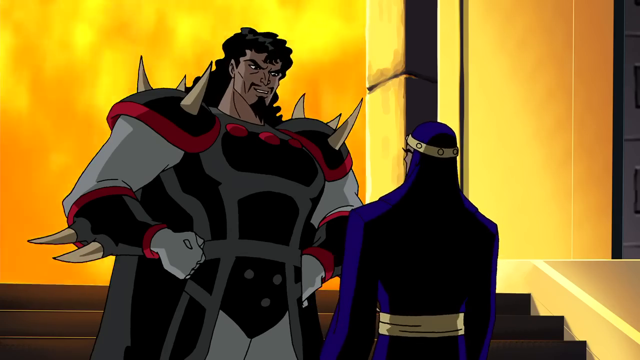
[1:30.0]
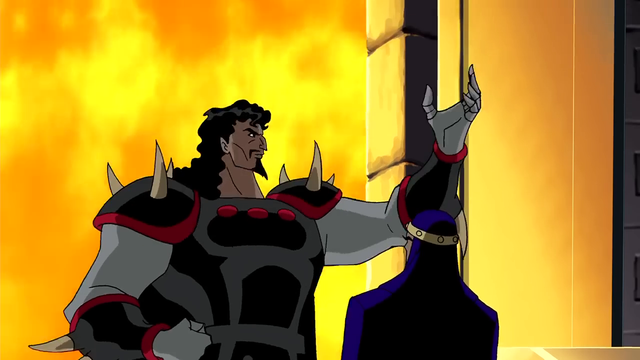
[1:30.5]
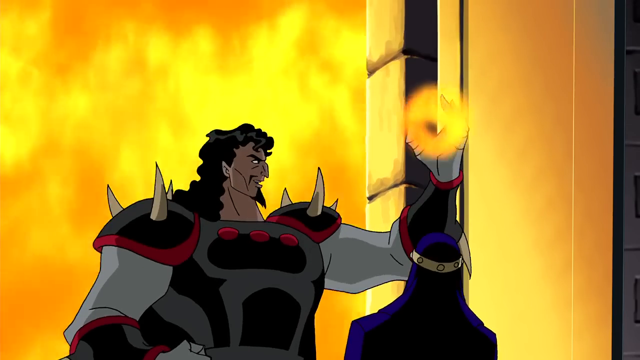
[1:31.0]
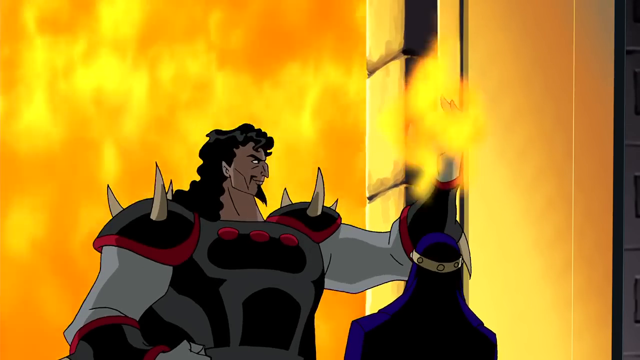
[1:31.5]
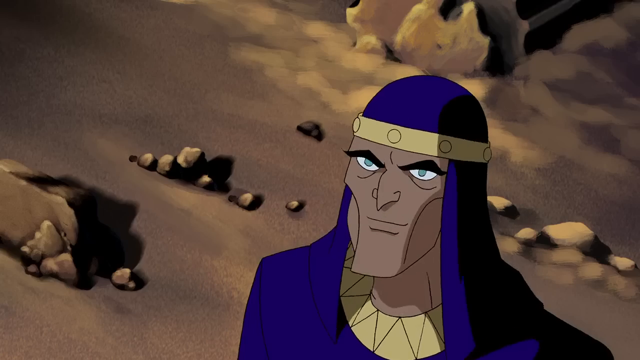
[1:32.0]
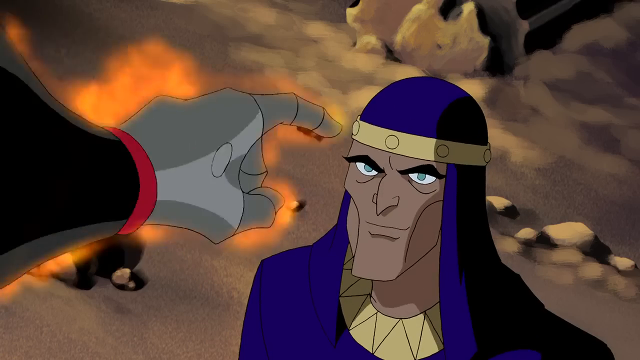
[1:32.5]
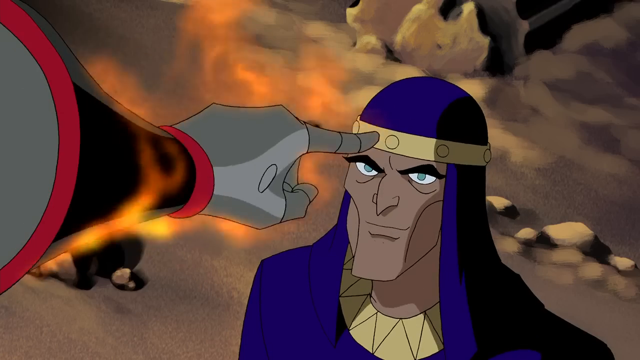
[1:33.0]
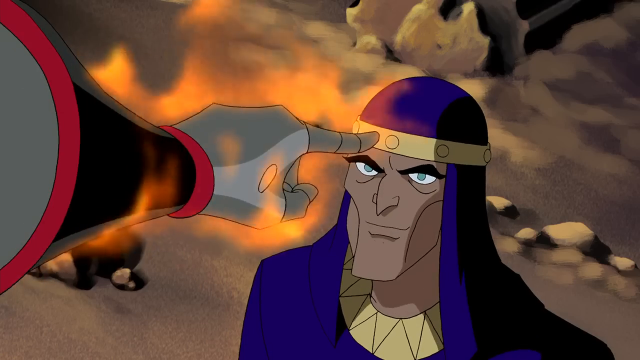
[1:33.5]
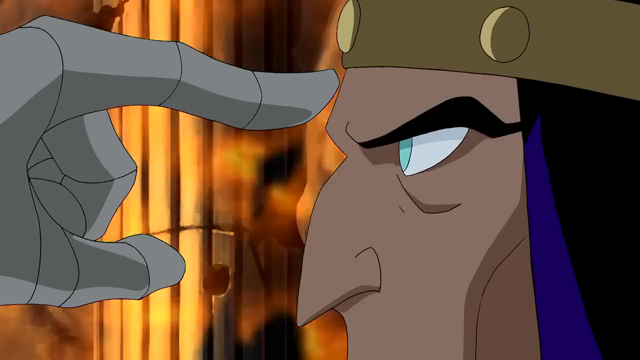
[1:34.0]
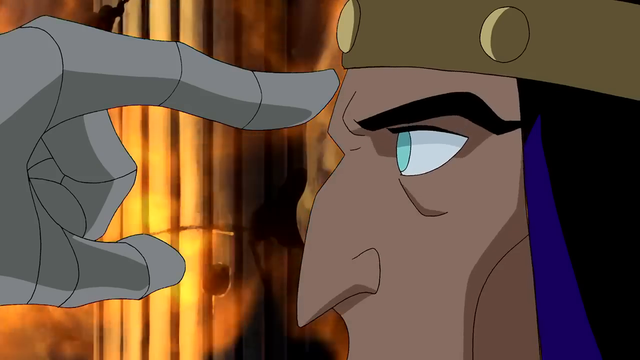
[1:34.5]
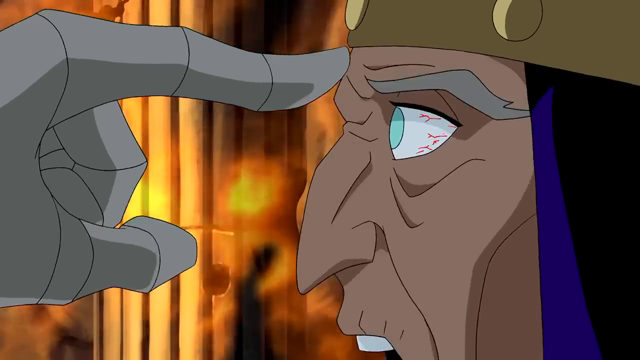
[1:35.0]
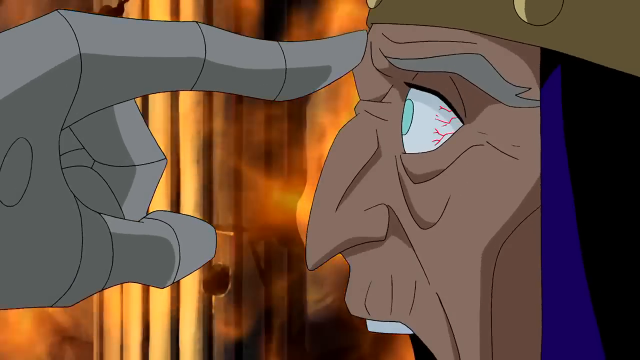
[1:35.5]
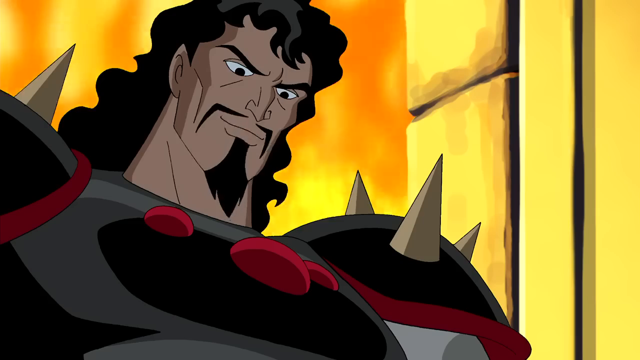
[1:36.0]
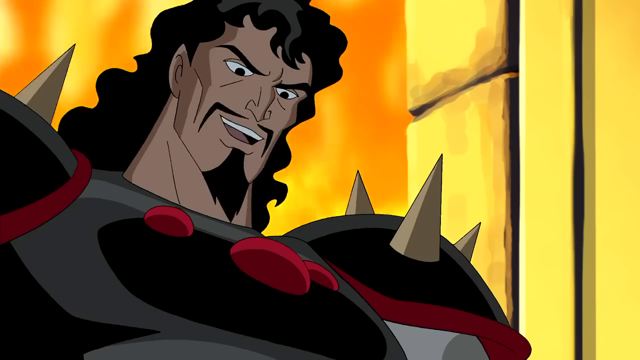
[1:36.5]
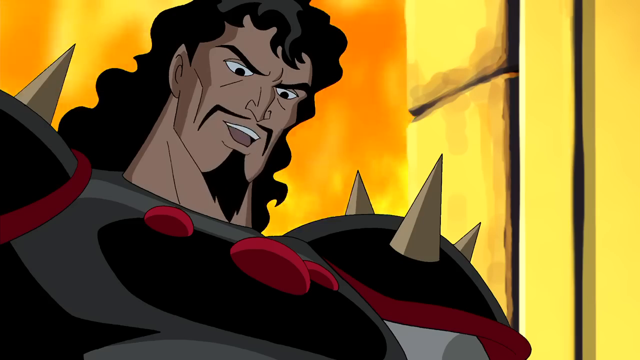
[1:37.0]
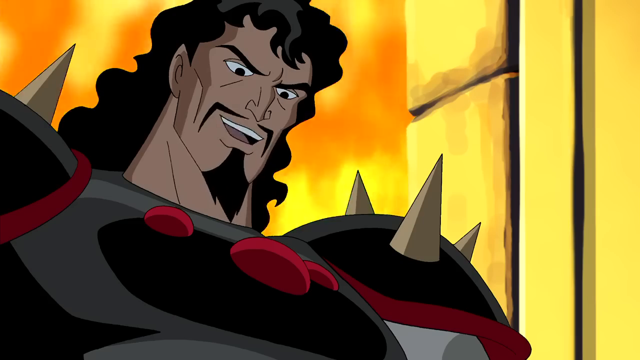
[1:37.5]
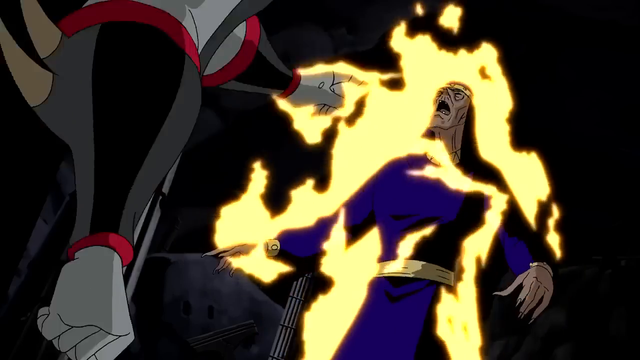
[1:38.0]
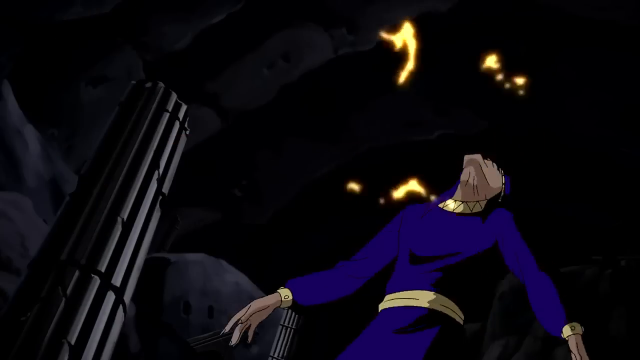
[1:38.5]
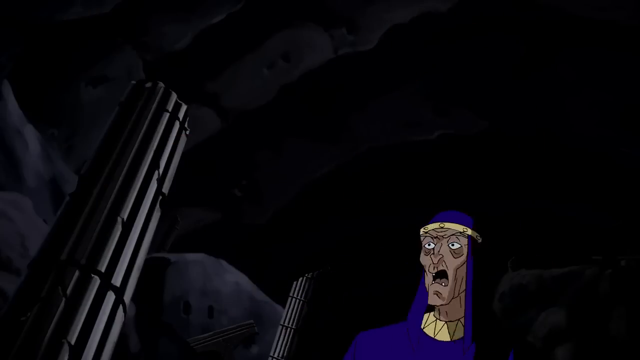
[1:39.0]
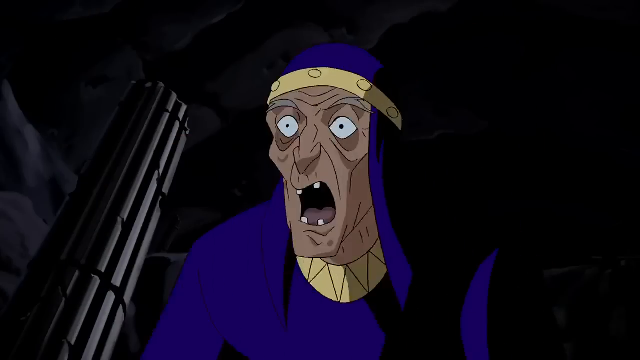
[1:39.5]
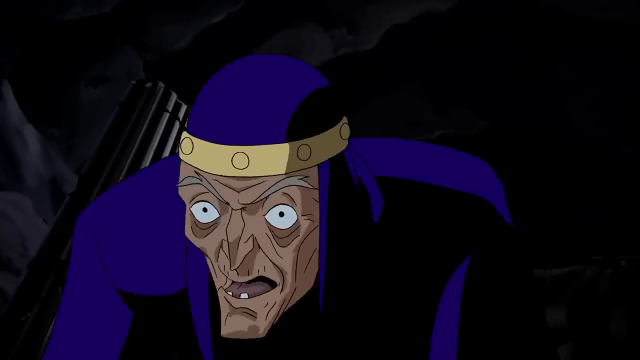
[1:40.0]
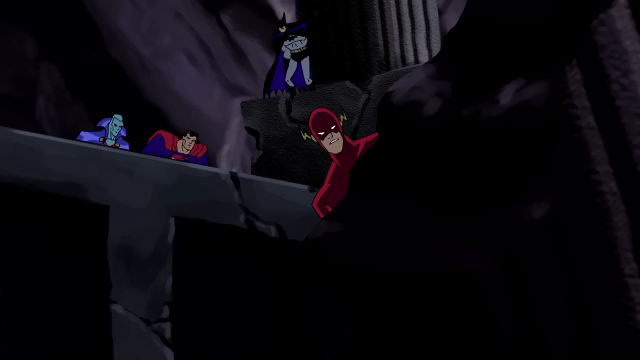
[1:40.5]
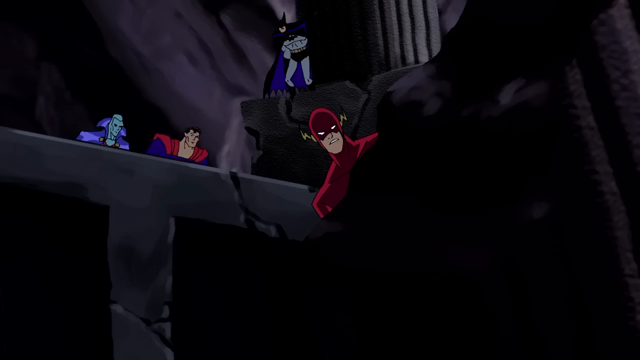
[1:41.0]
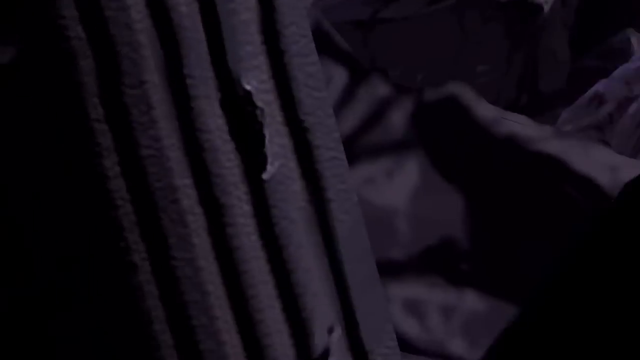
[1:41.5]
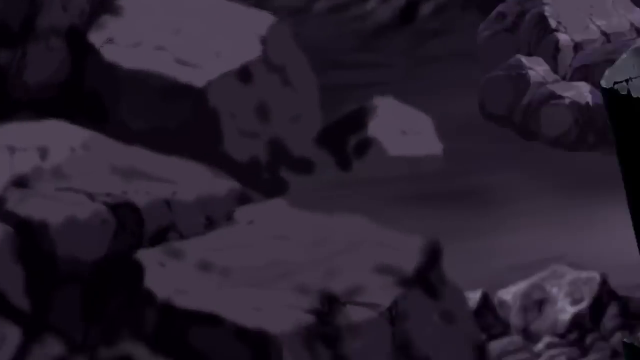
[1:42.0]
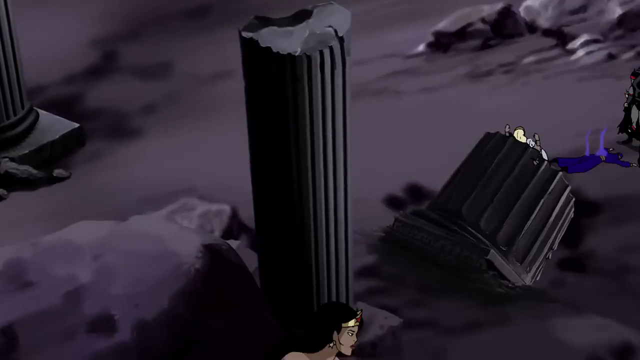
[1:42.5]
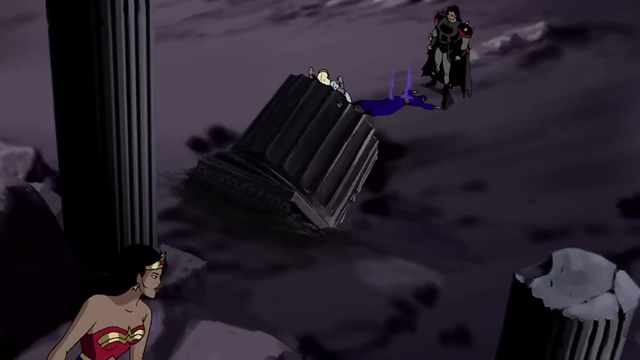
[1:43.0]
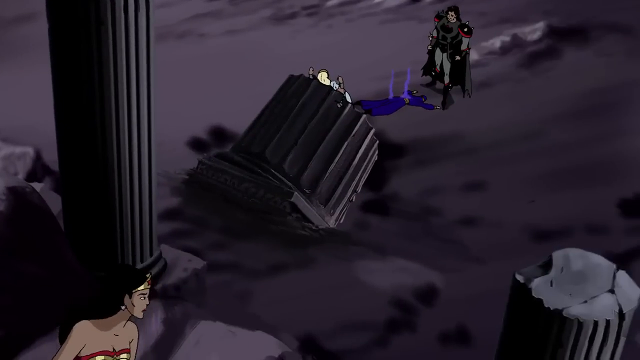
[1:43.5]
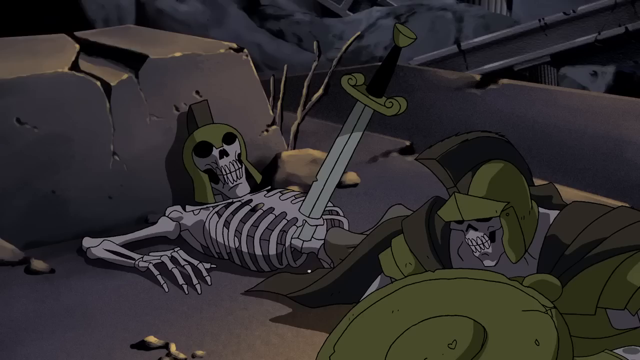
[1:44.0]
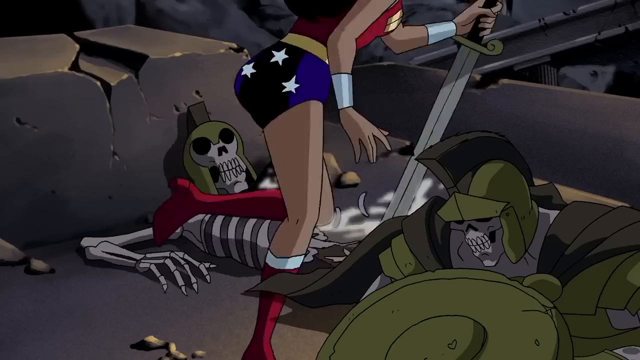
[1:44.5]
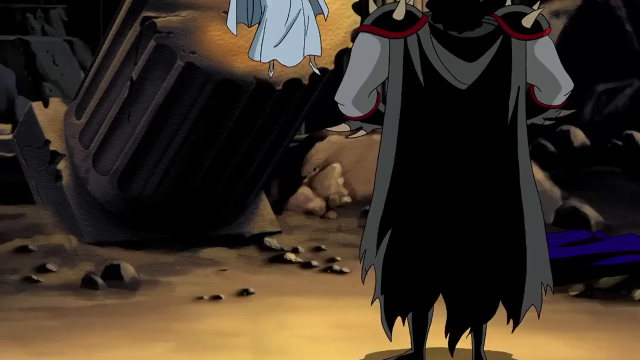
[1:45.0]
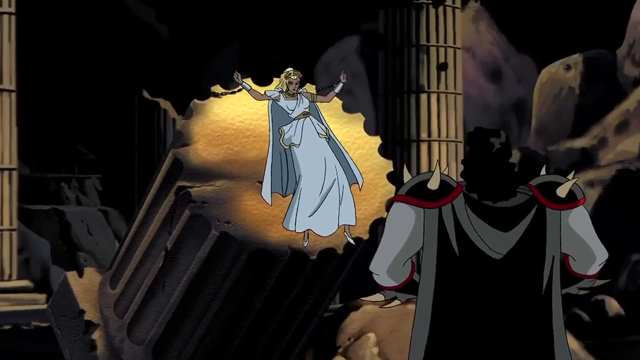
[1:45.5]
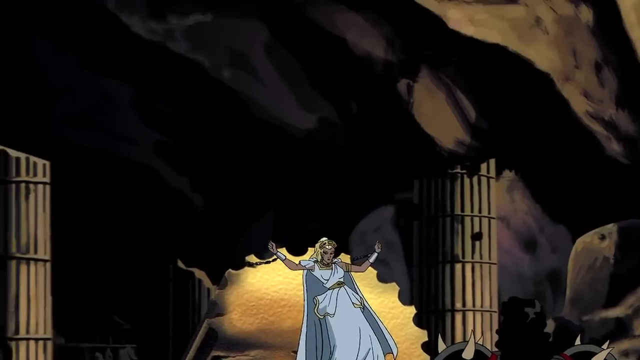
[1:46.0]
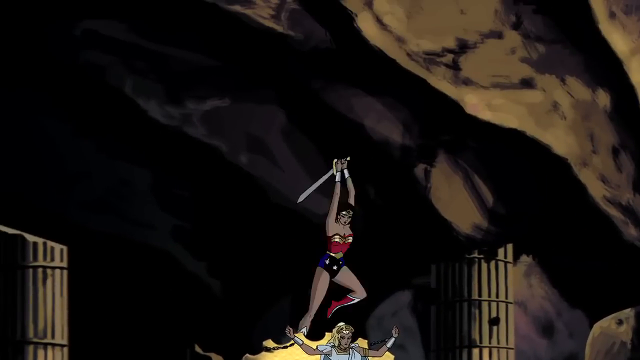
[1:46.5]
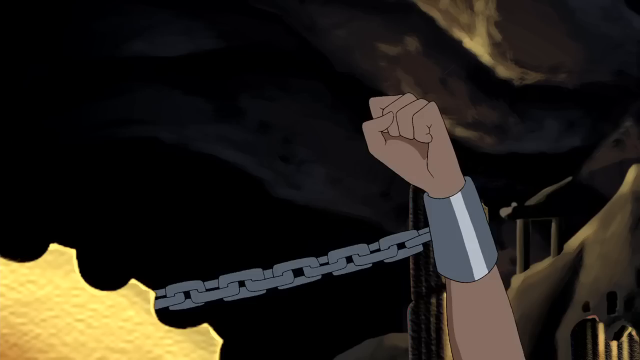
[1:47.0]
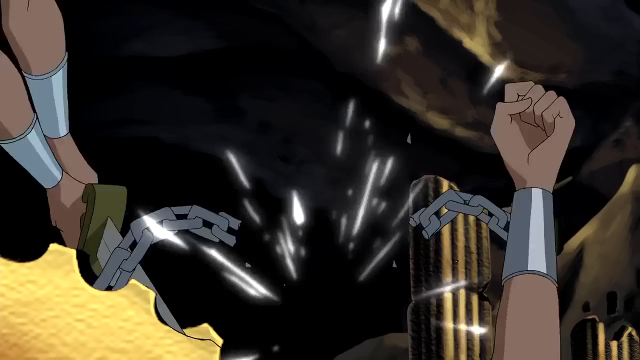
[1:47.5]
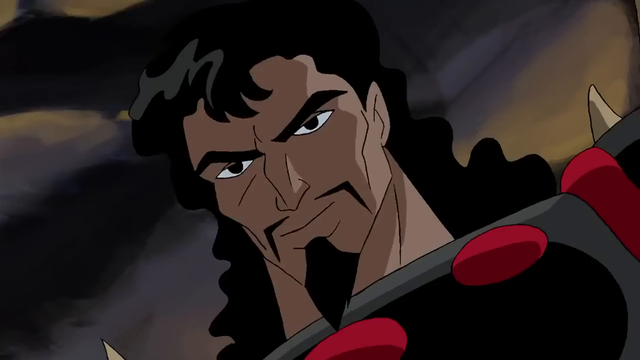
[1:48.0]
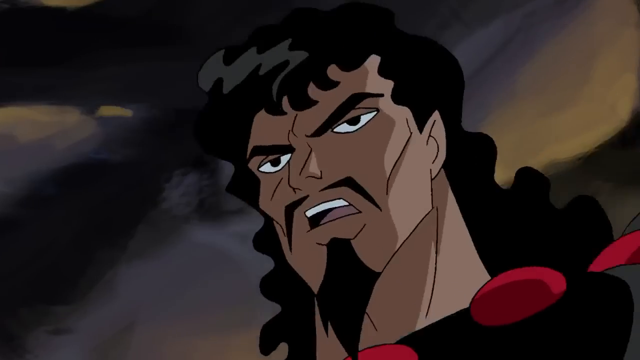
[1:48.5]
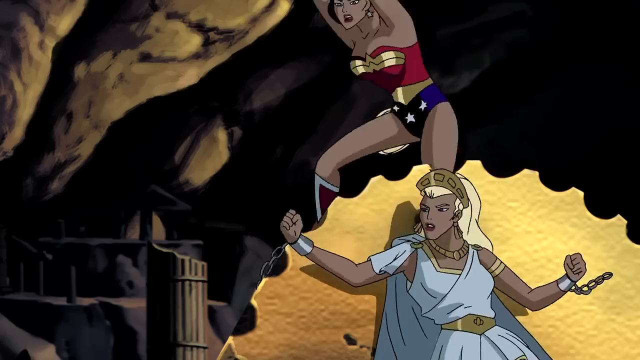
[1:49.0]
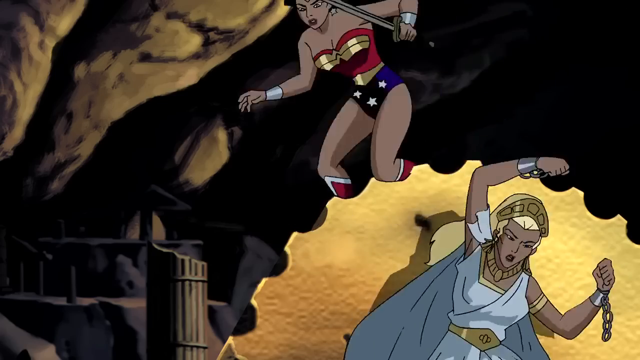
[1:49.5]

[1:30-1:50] Yellow fire blazes in the background, along with a yellow and black portion of the wall and a bit of gray wall. In the foreground is the large muscular character with wavy black hair, a long black beard and tan skin, wearing black, gray and red armor. Three horns stick out of each shoulder pad, and horns stick out of the cuffs on his wrists. He stands with his arms outstretched from his body and bent at the elbows: his right arm is slightly in front of him with the hand balled into a fist, and his left arm points toward his body with the back of his hand on the side of his hip. Fire appears out of his left hand. He pushes the man in the black and blue outfit in the forehead with his forefinger. Wonder Woman then flies through the air and cuts the chains holding the woman to the top of the column. The woman's arms are free, and she lifts her body up away from the column.